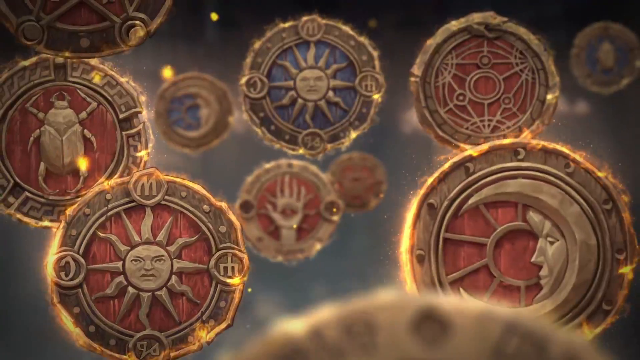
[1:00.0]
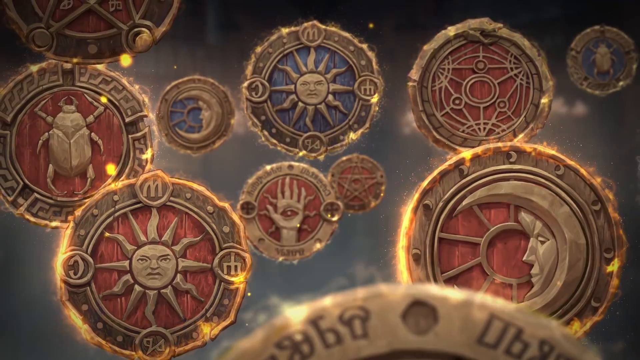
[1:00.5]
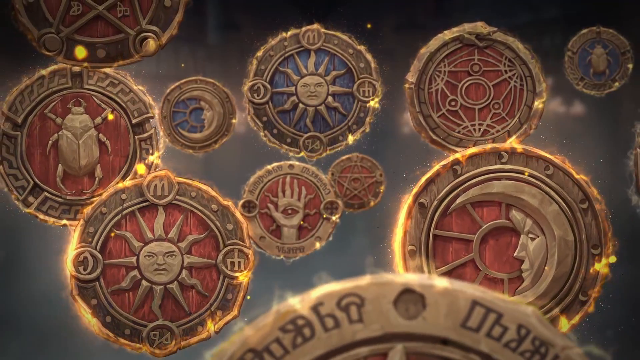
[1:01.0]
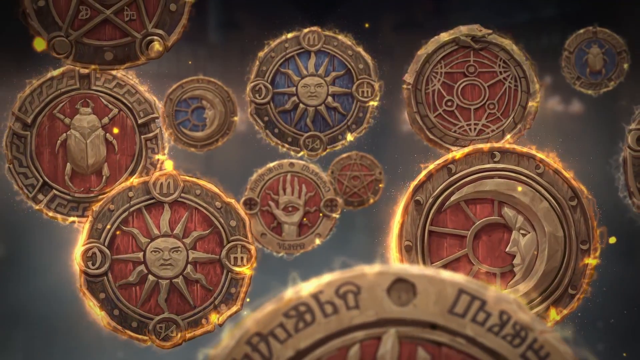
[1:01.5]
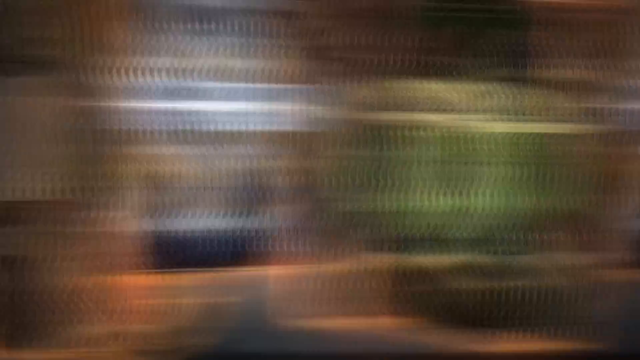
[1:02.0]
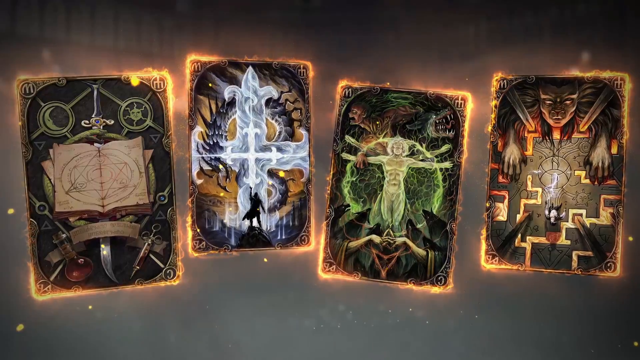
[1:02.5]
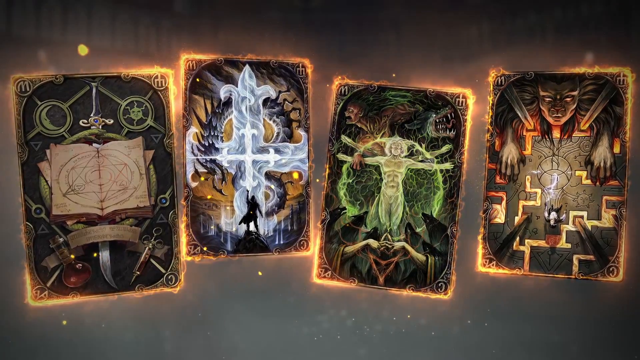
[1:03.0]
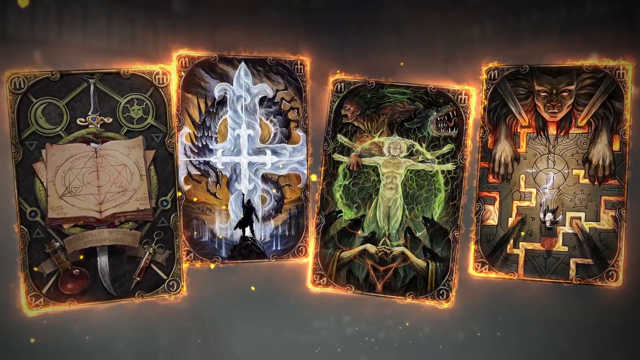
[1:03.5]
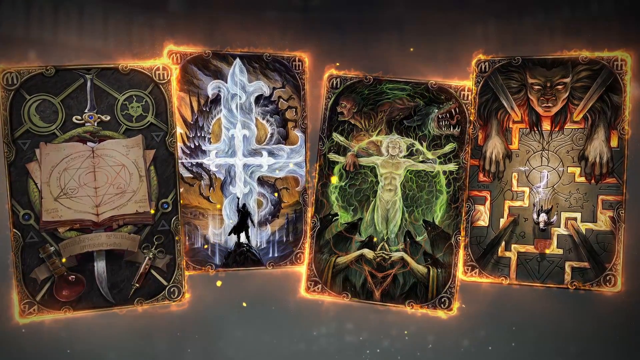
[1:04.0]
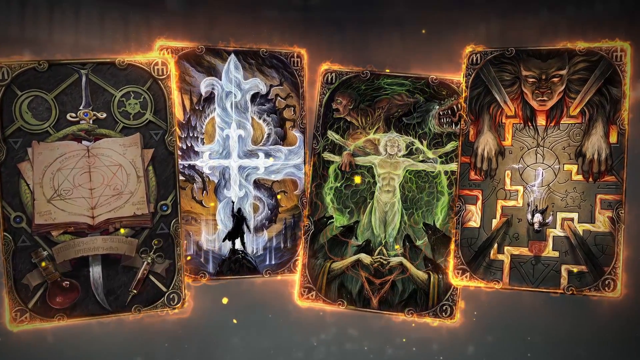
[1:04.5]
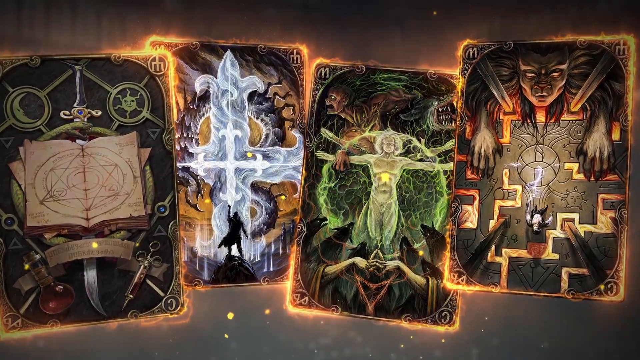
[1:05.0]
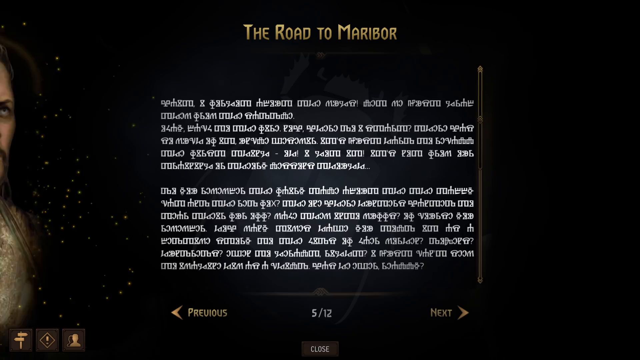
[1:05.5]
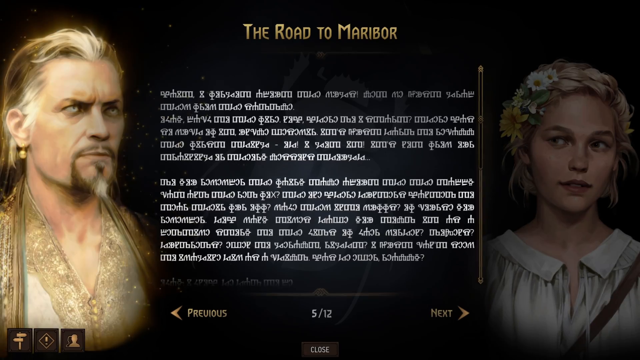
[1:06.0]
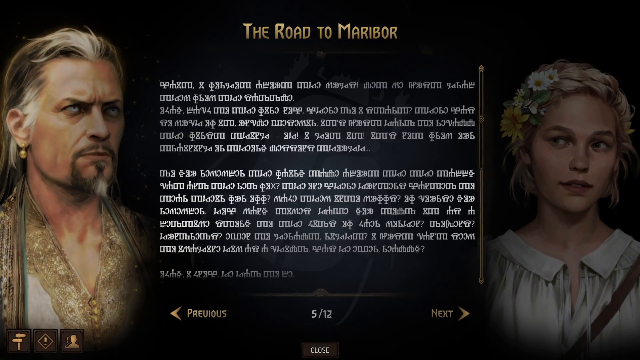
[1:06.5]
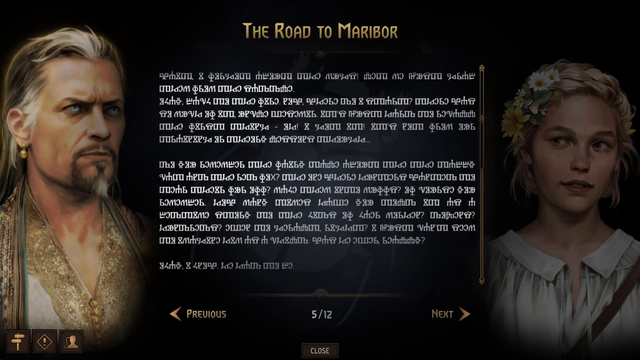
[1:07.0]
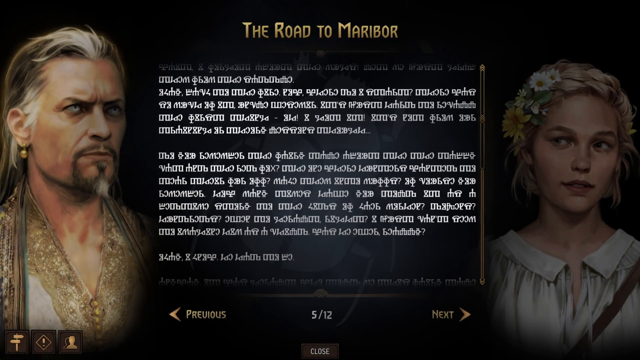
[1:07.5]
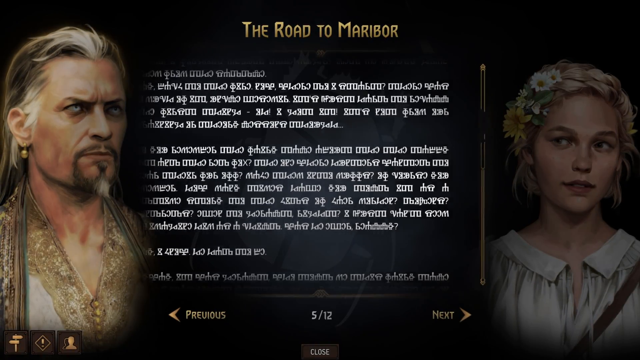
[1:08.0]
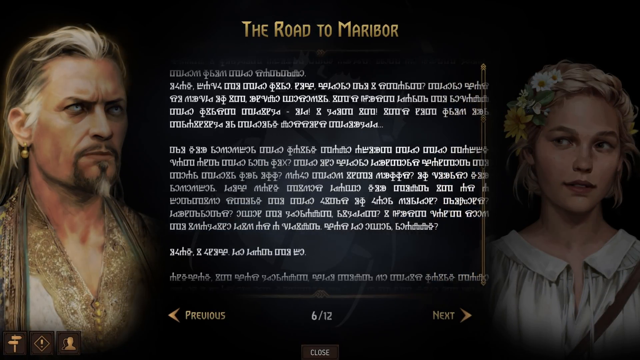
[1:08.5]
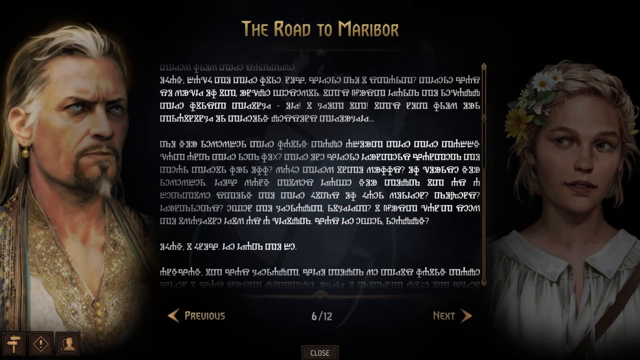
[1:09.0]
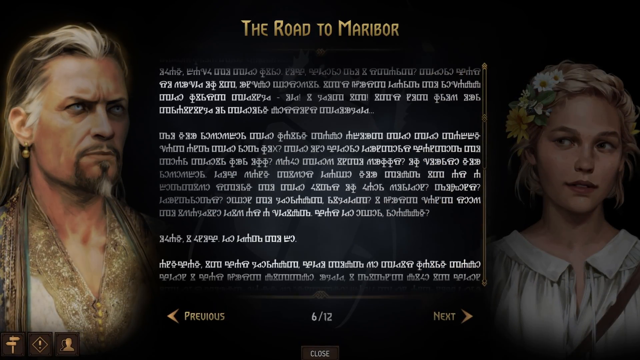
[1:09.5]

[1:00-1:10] In the trailer for the mobile fantasy game Journey, which uses character cards with different designs, four glowing cards appear: one depicts an open book; another depicts a cross inside another cross with characters standing in front of it; an evil-looking card shows hands touching and a man in the middle surrounded by monsters; and the last shows a lion-like creature approaching a human, trapped behind two bars. A black screen follows with an image of an older man on the left and a young woman on the right. At the top is the text "The Road to Maribor" as text in an ancient language appears on the screen.